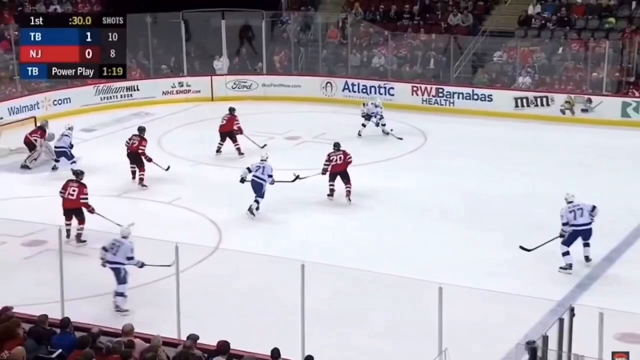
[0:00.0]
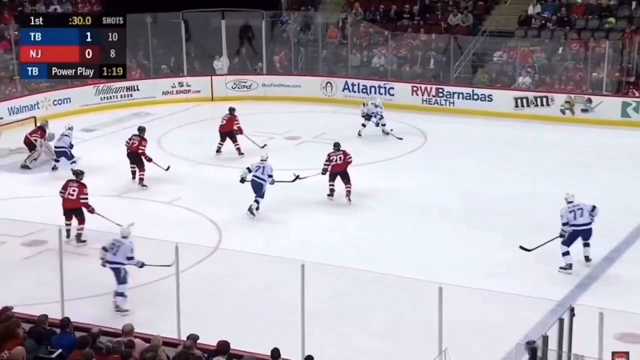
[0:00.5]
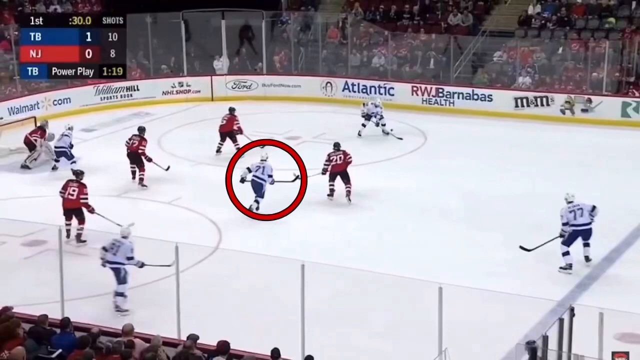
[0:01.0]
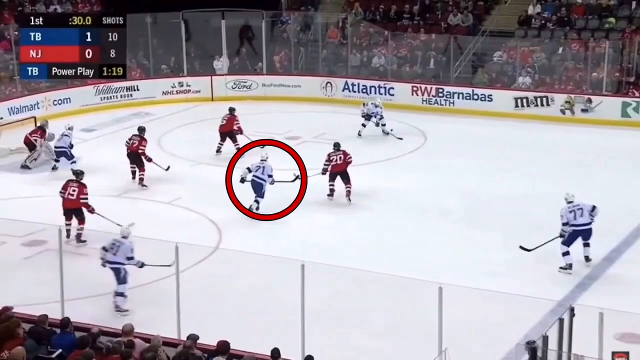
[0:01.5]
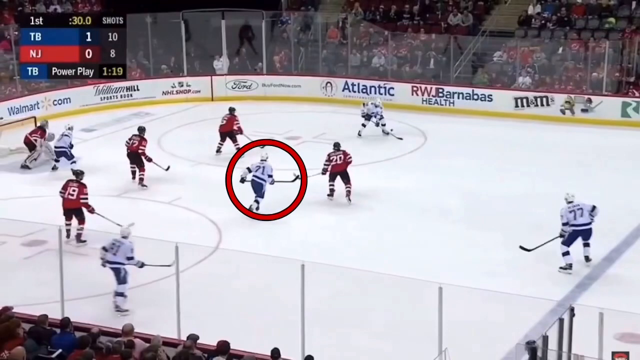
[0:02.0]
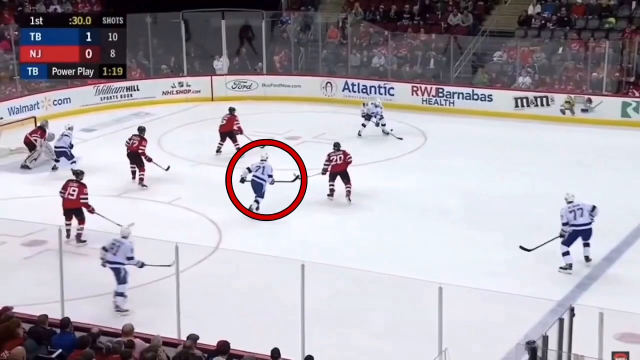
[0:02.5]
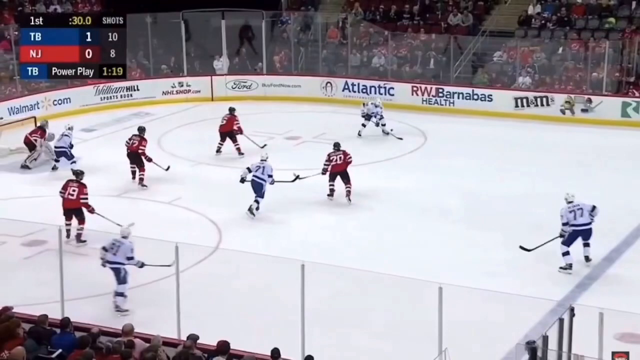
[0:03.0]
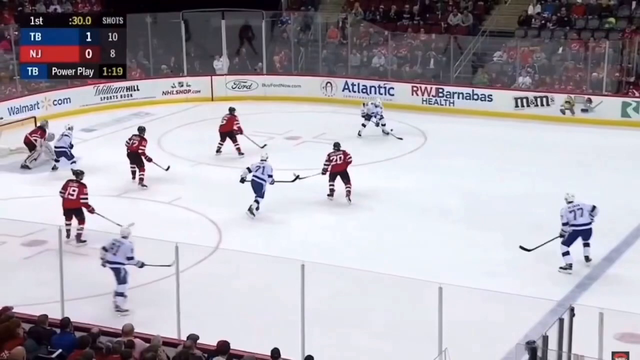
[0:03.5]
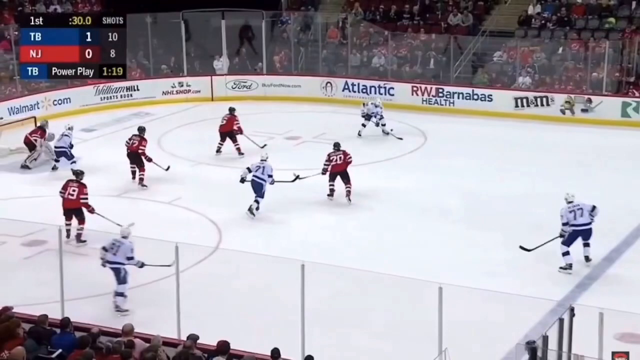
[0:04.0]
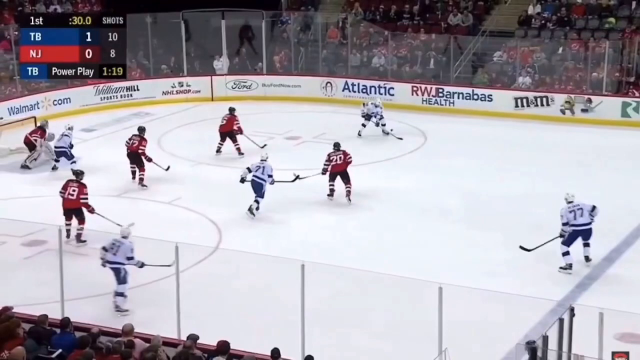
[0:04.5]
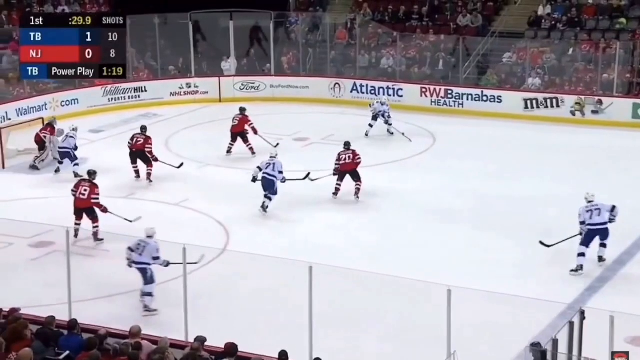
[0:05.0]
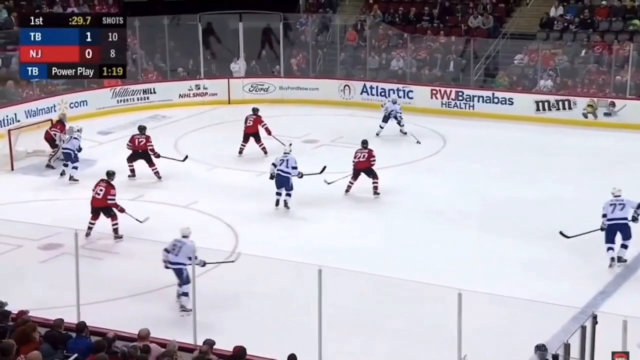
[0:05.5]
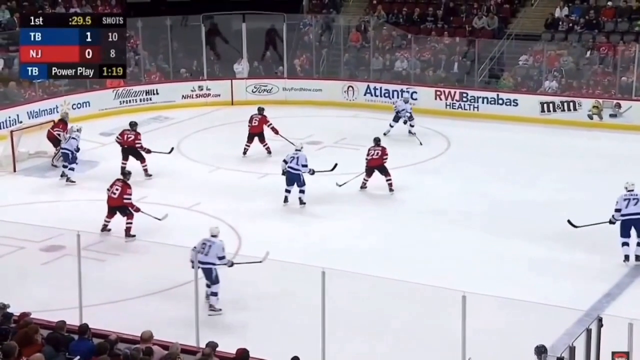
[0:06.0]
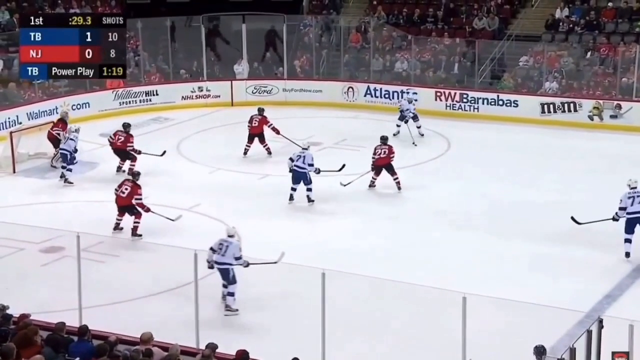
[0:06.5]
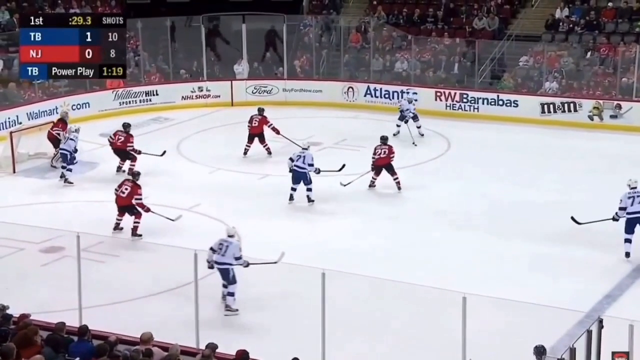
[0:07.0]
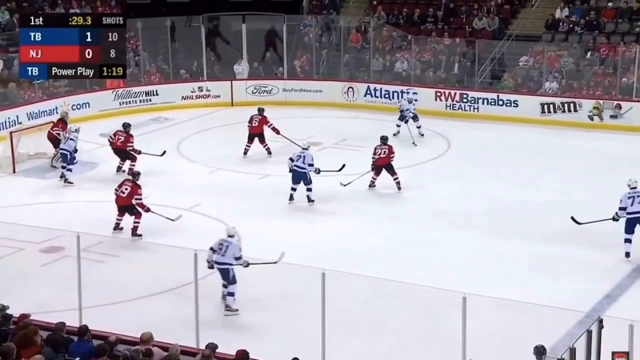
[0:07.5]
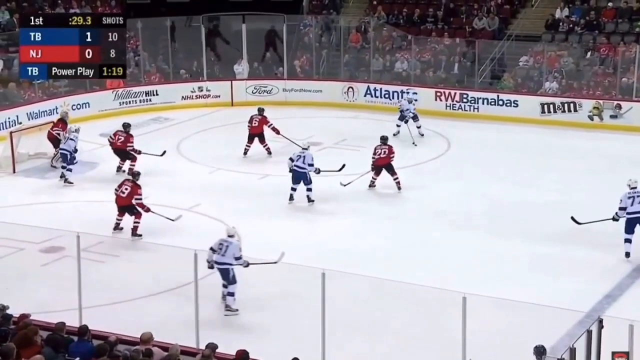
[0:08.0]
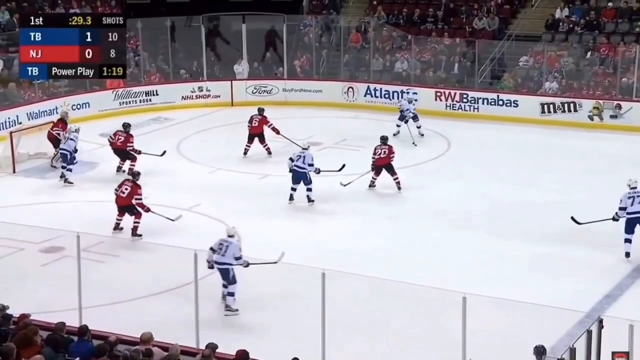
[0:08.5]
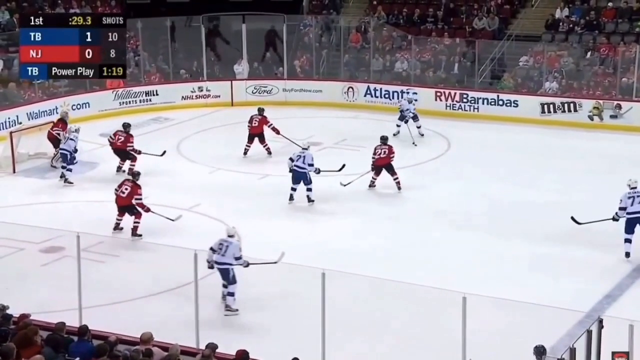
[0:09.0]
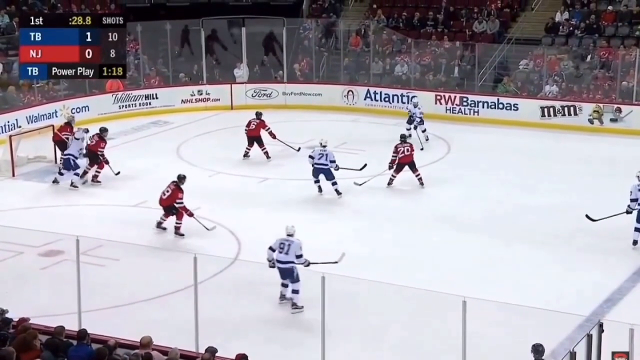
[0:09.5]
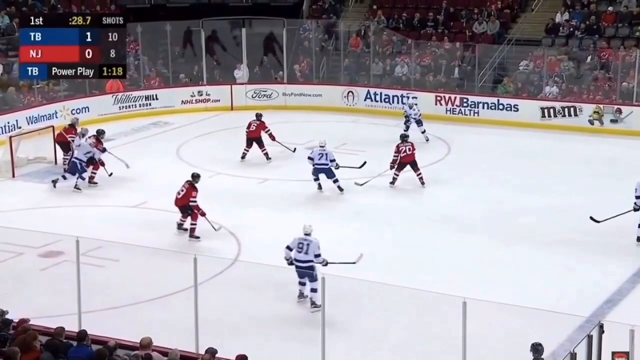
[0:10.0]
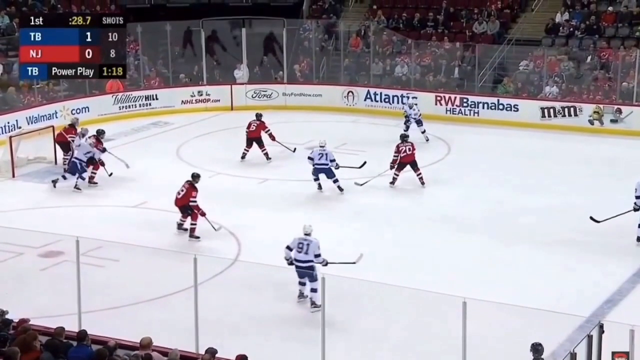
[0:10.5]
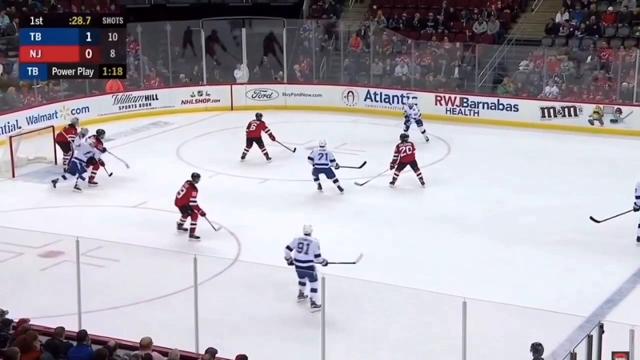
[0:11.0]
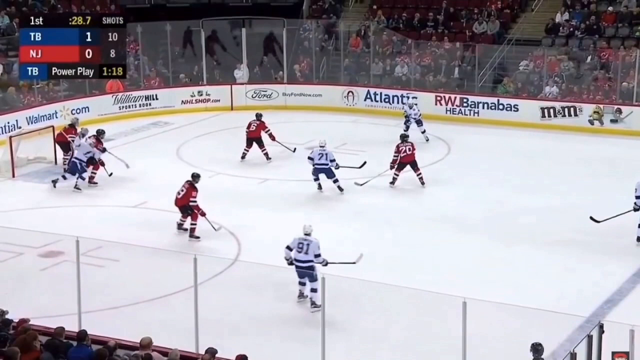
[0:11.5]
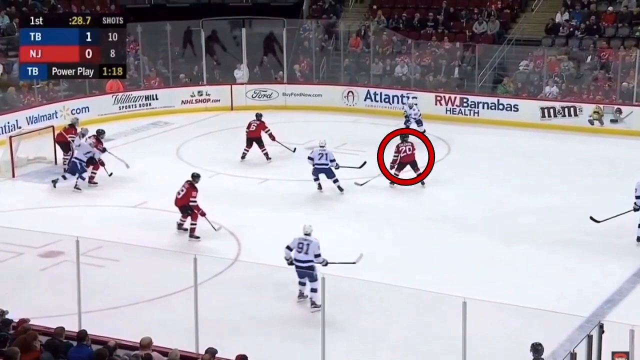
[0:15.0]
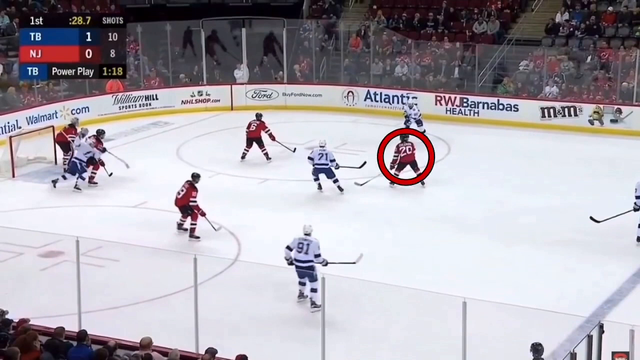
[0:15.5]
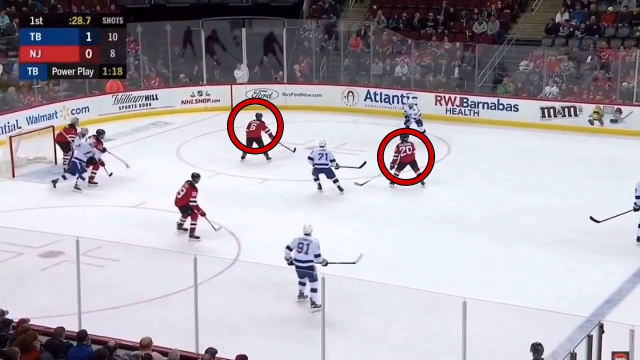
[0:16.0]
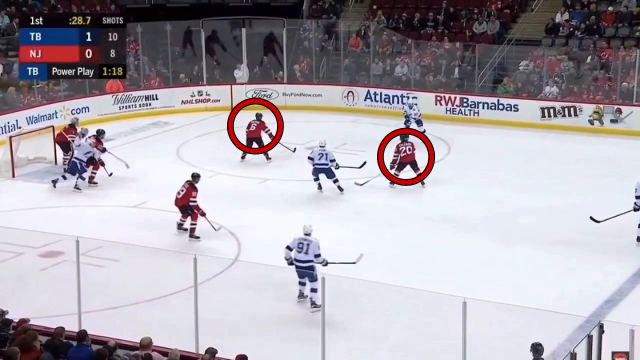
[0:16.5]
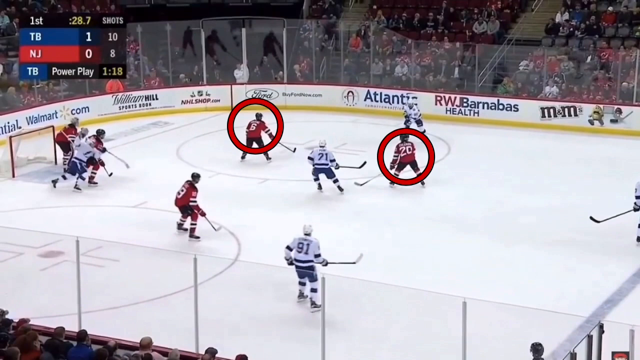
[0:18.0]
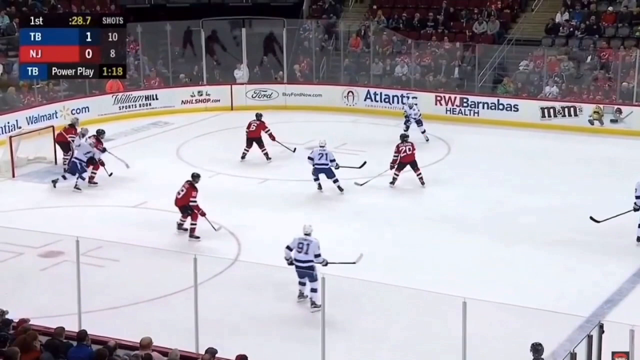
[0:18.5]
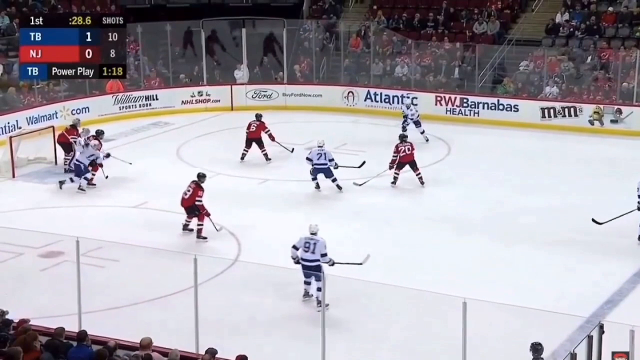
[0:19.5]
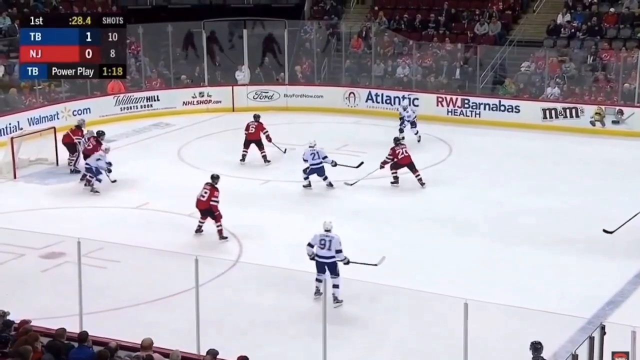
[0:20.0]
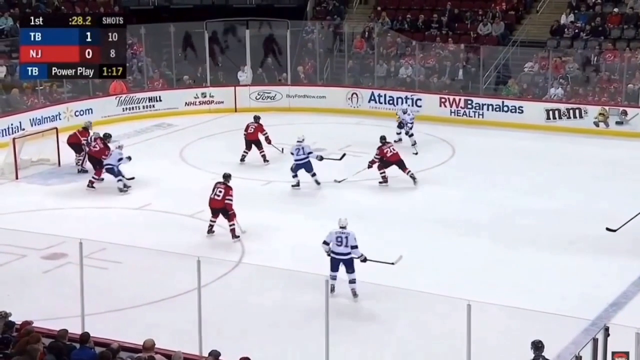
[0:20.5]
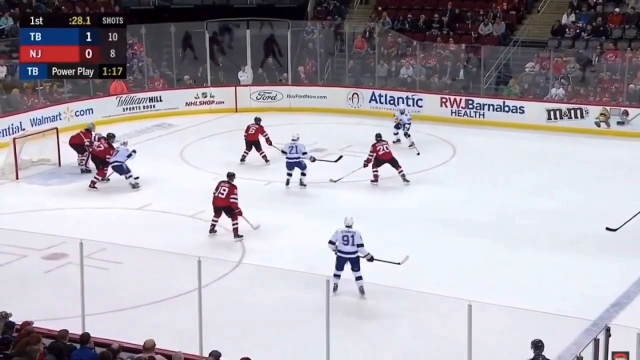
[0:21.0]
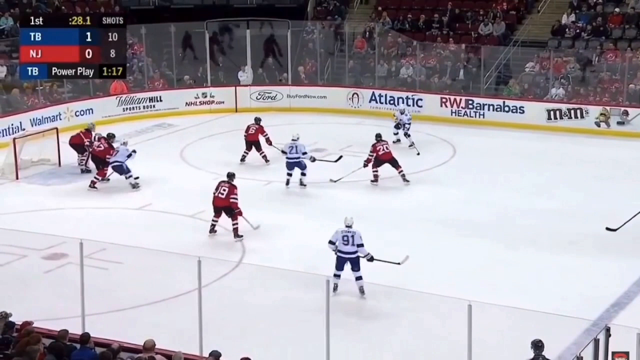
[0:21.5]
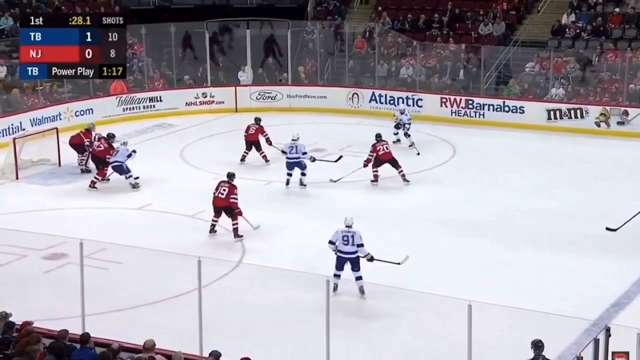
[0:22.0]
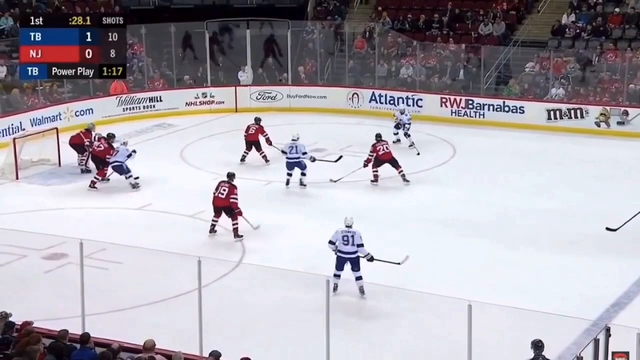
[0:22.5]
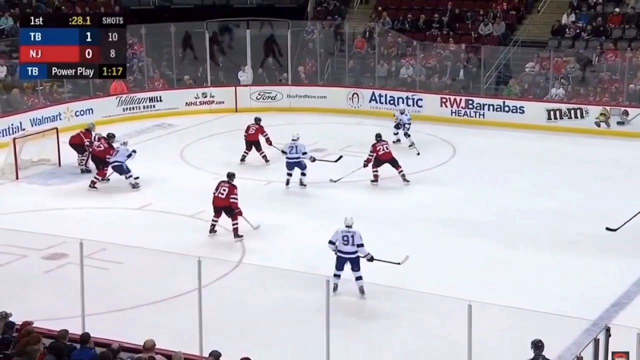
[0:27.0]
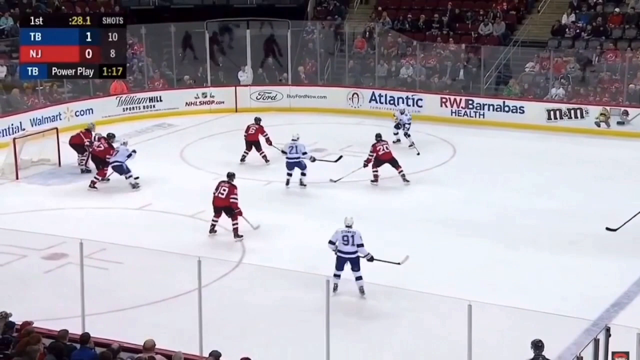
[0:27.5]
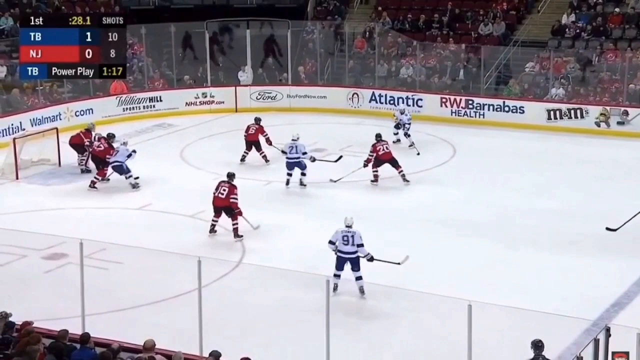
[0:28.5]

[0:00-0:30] An NHL hockey game between Tampa Bay and New Jersey is underway in the first period with 30 seconds left. Visiting Tampa Bay holds a 1-0 lead and has 10 shots on goal to New Jersey's eight. Tampa Bay is on a power play with 1 minute and 19 seconds remaining in it. Tampa Bay player number 71 is circled on screen. Tampa Bay wears white and blue, and New Jersey wears red and white. Next, two New Jersey players, number 6 and number 20, are circled. Advertisements along the wall include Wal-Mart, William Hill, Ford, Atlantic, RWJBarnabas Health and M&M's.